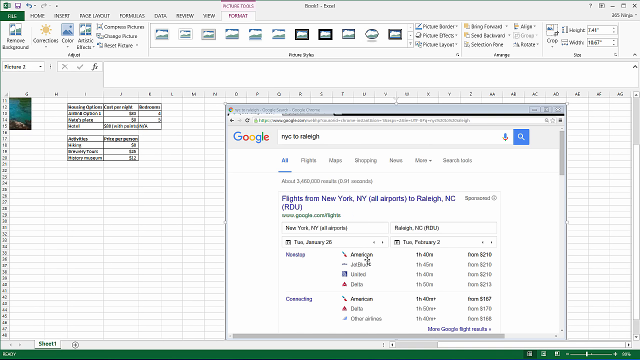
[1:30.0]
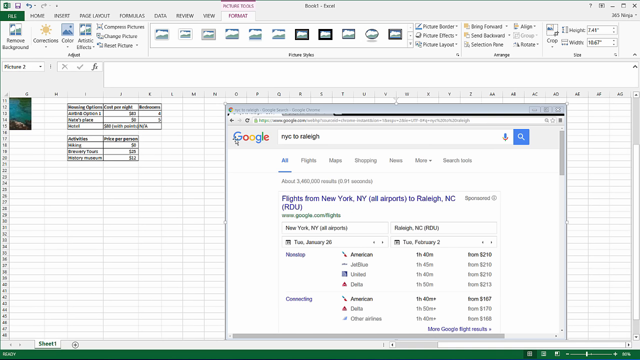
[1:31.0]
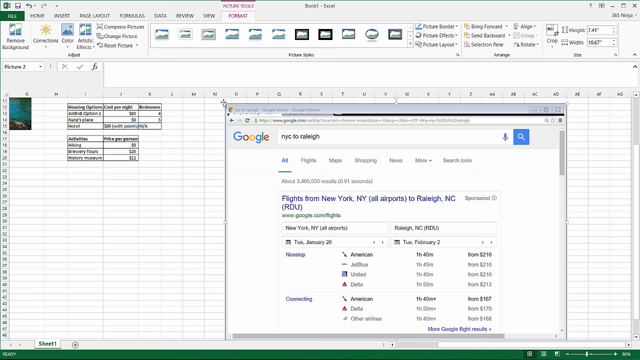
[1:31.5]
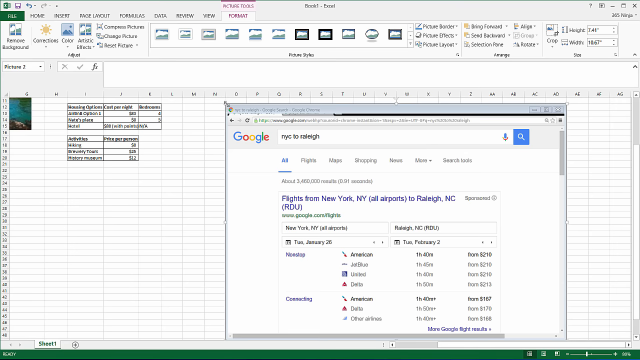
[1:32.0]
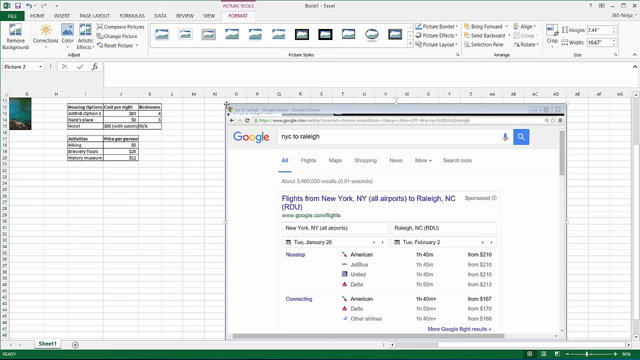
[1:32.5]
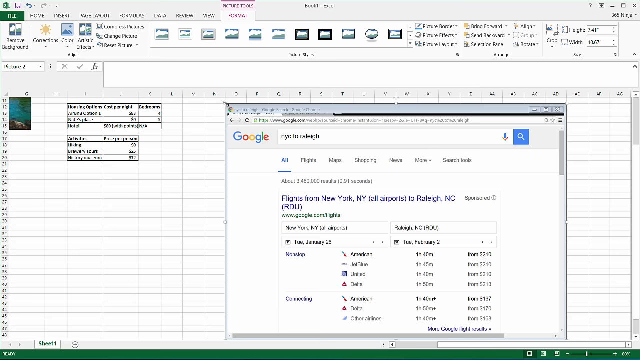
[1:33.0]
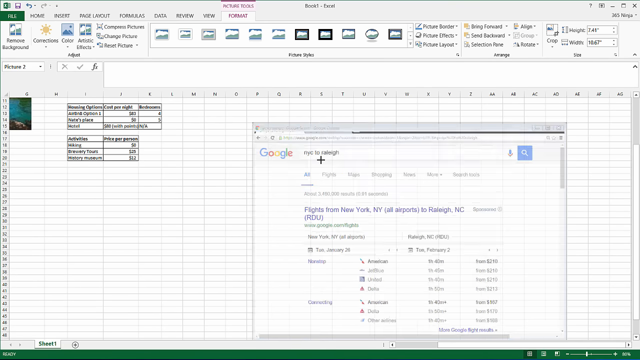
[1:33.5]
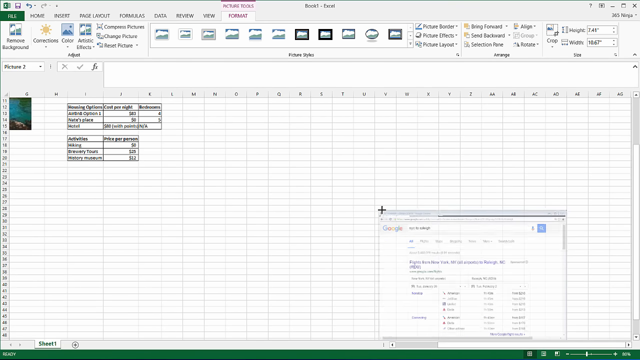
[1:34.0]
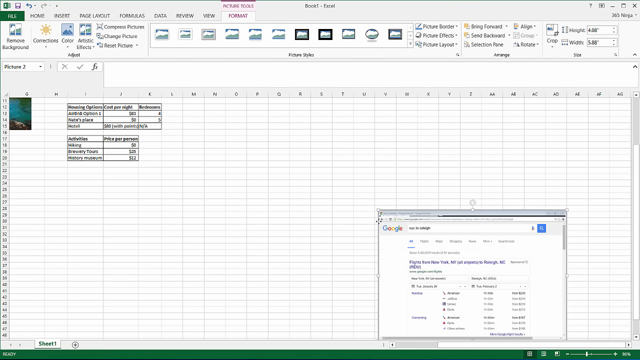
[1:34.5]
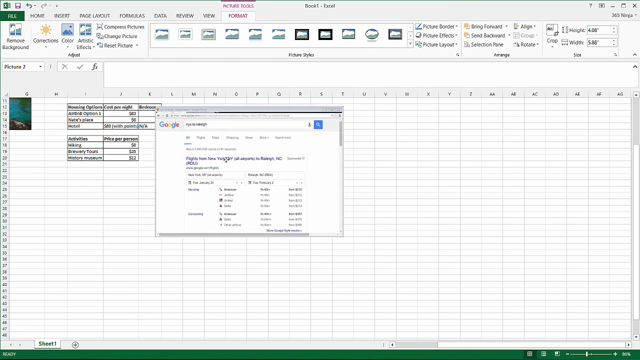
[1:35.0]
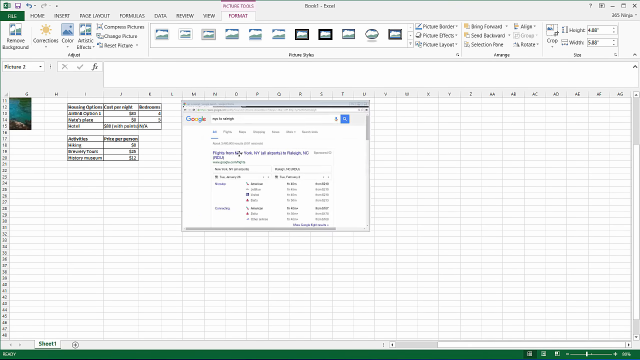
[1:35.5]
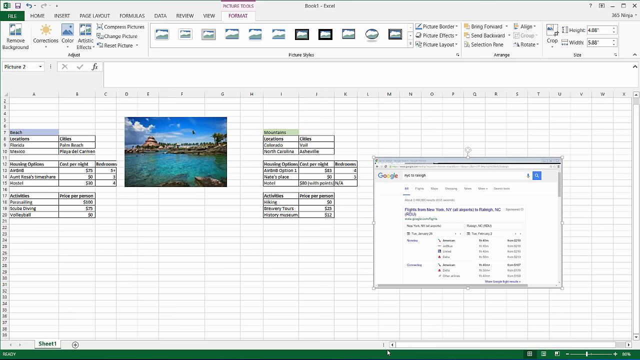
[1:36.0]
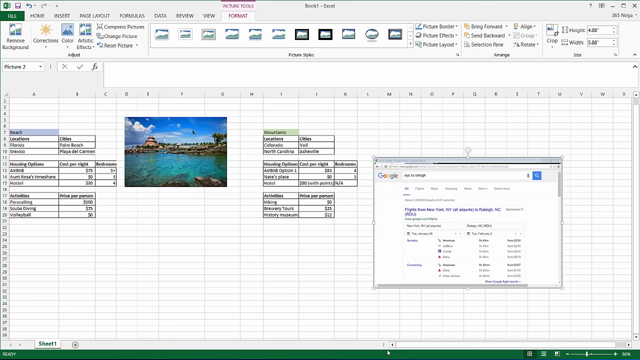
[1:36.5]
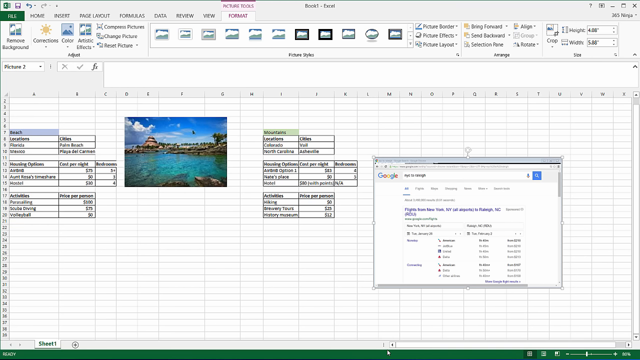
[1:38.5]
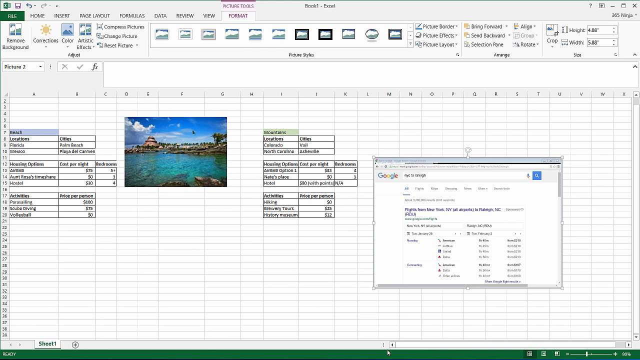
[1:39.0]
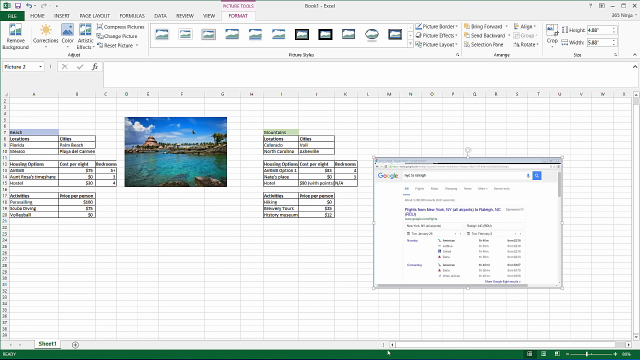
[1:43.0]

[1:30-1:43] The 2016 vacation plan is shown as the person attaches flight plans after the pictures of the places added earlier. A flight from New York to Railey, North Carolina, is listed with American, taking 1 hour 40 minutes and costing $210, and the cost and duration of a connecting flight are also shown. For the mountain vacation, the activities listed are hiking, village tours, and historic museums.